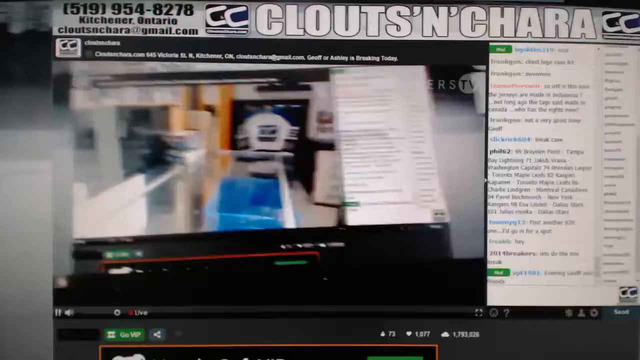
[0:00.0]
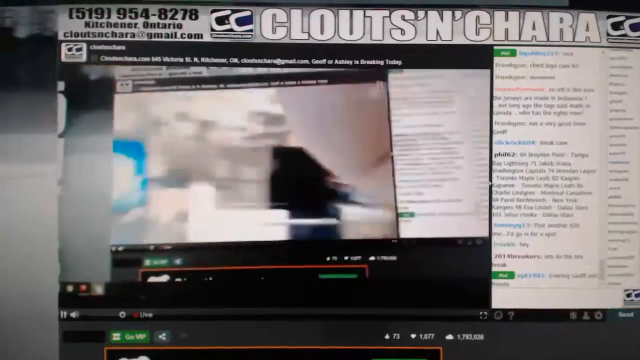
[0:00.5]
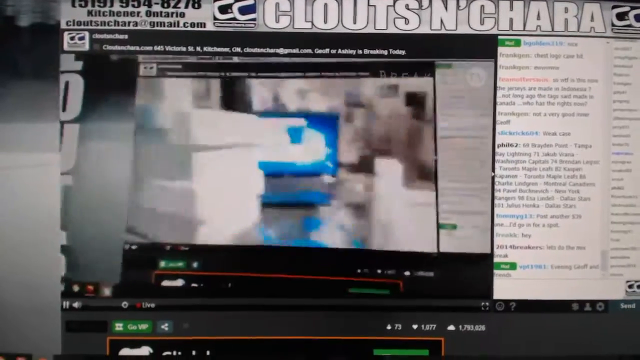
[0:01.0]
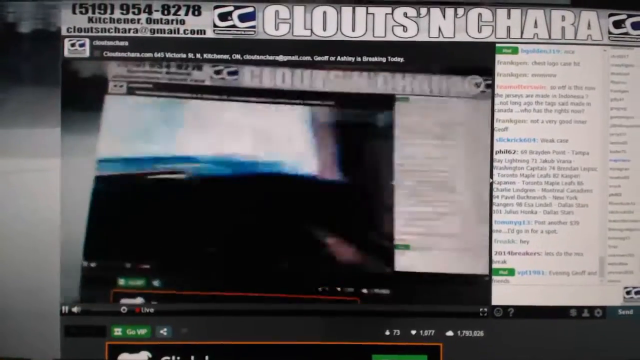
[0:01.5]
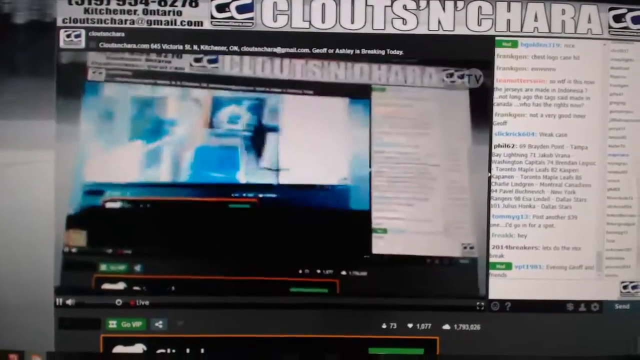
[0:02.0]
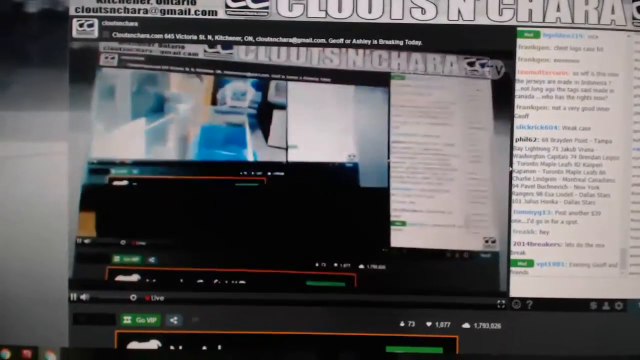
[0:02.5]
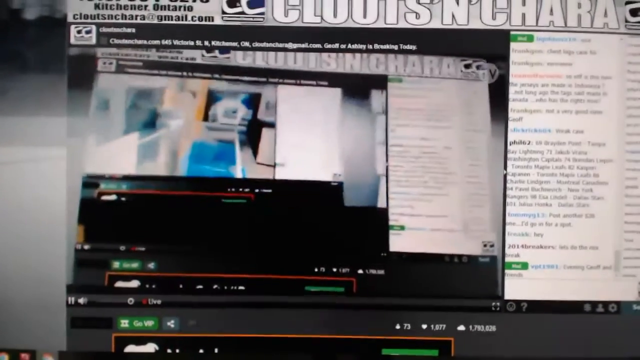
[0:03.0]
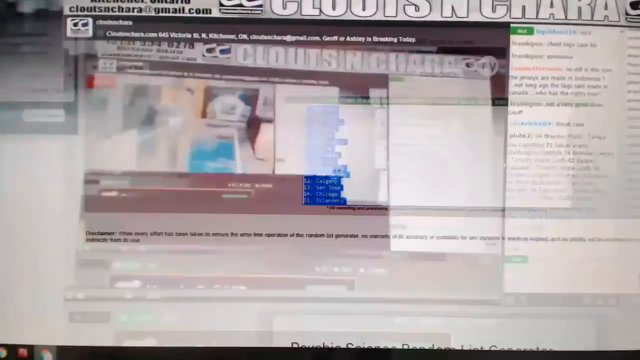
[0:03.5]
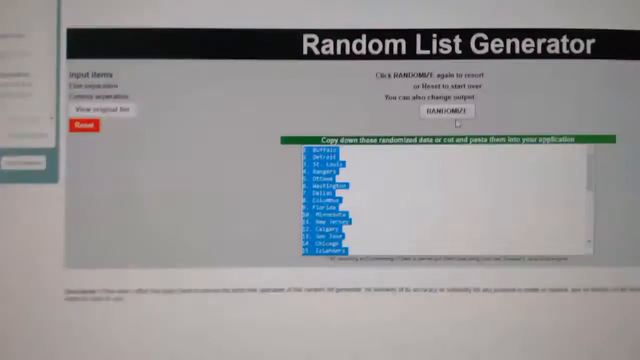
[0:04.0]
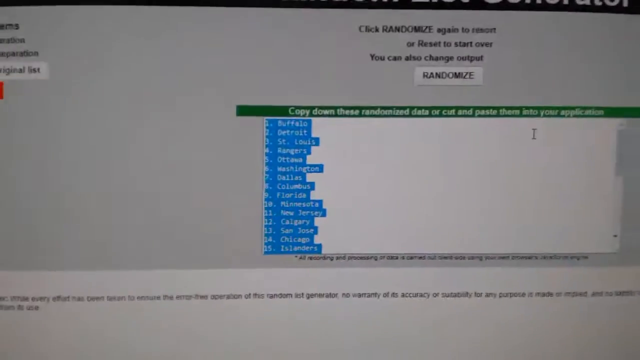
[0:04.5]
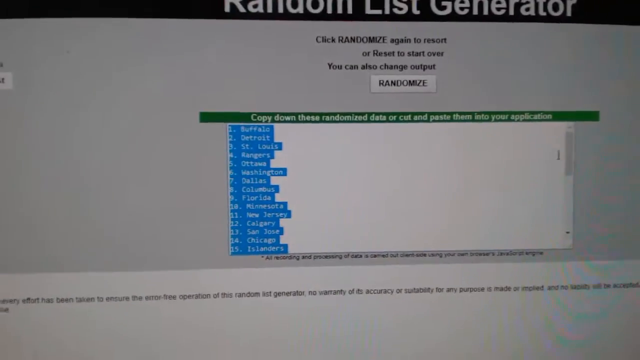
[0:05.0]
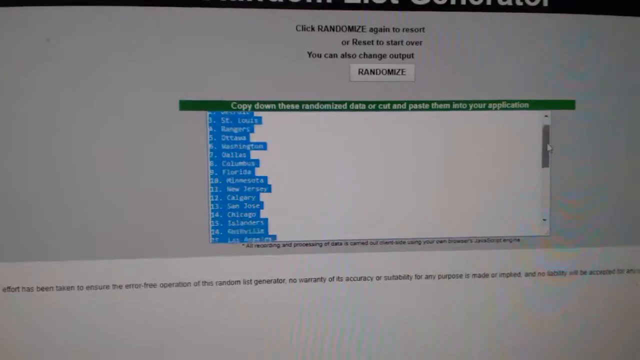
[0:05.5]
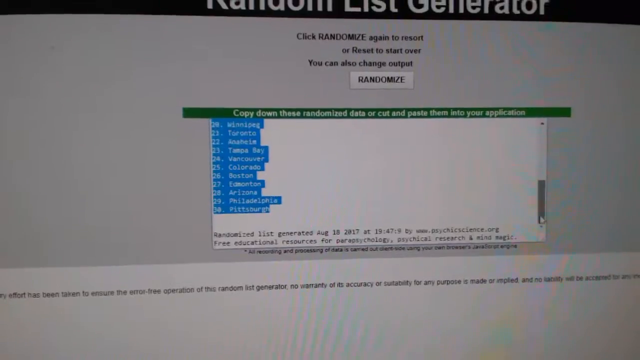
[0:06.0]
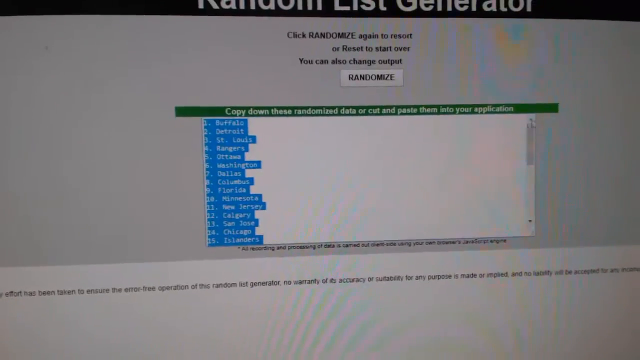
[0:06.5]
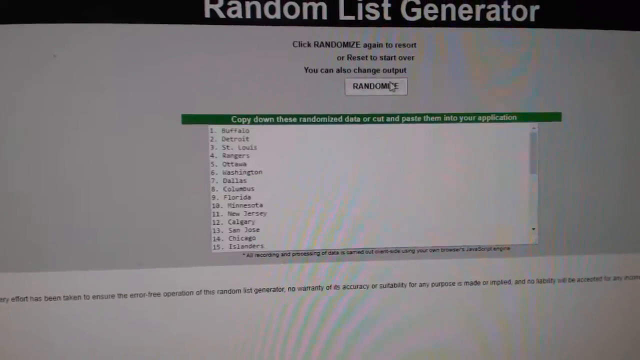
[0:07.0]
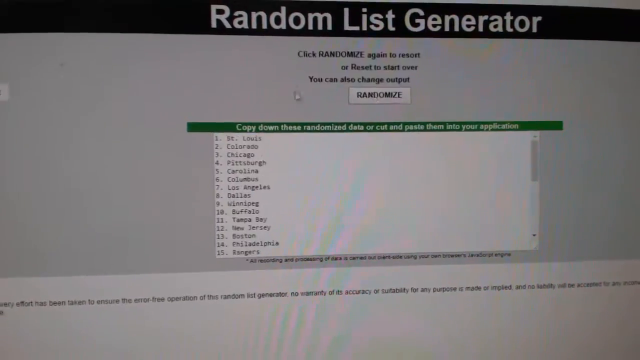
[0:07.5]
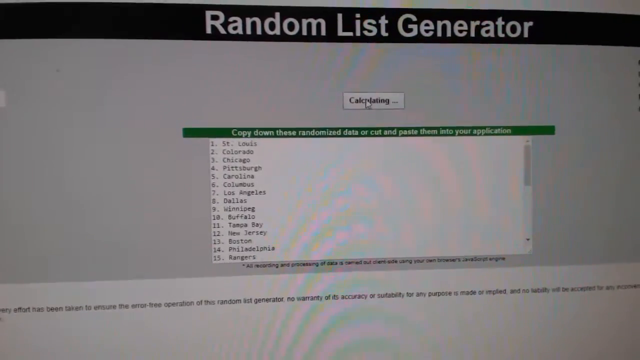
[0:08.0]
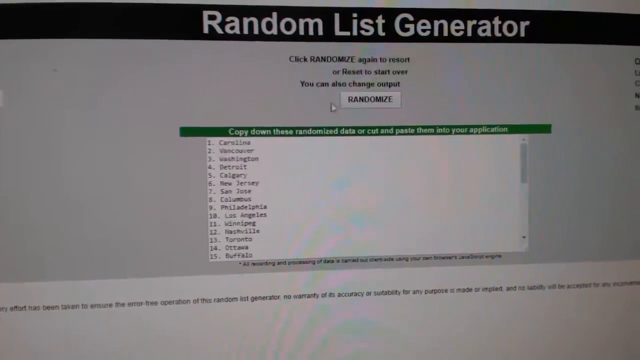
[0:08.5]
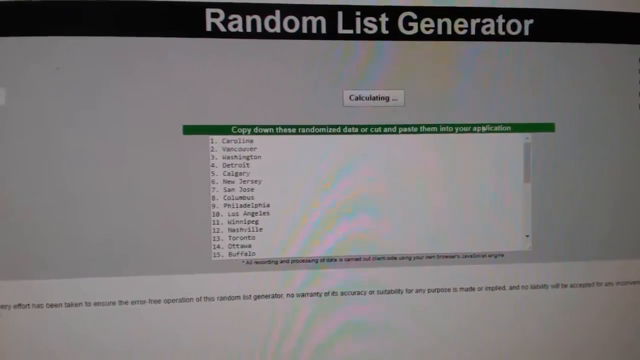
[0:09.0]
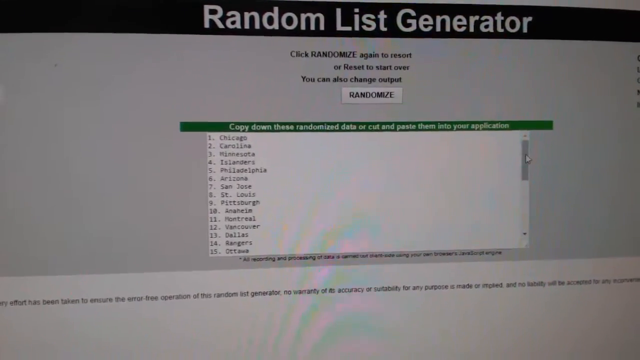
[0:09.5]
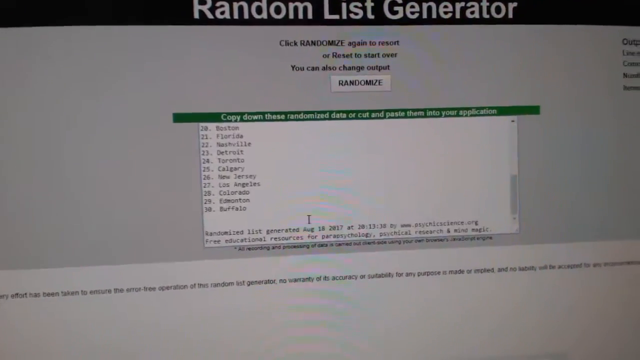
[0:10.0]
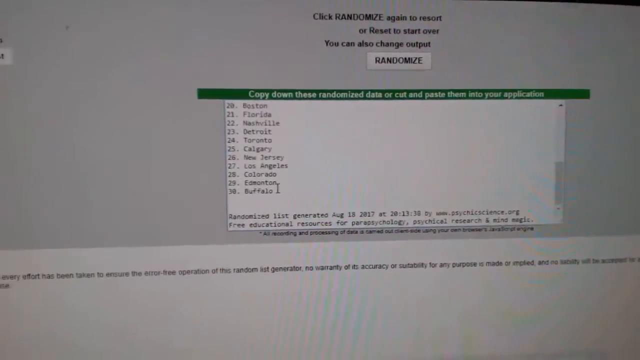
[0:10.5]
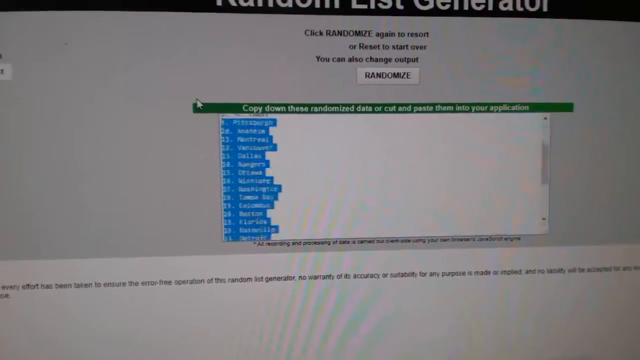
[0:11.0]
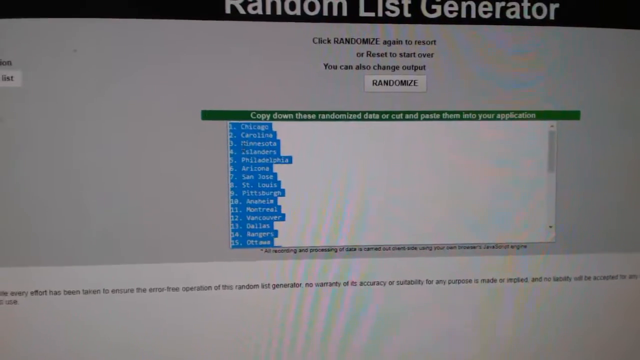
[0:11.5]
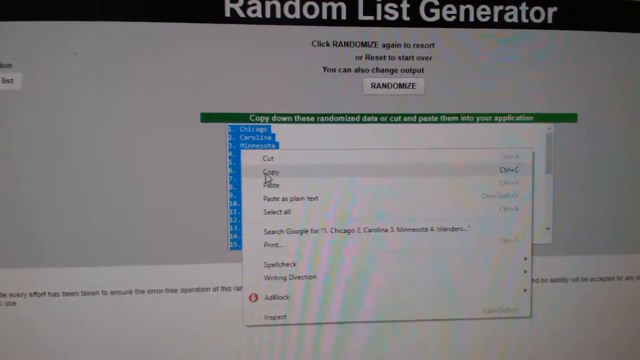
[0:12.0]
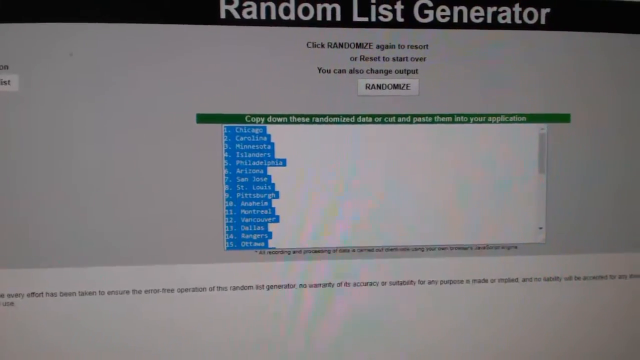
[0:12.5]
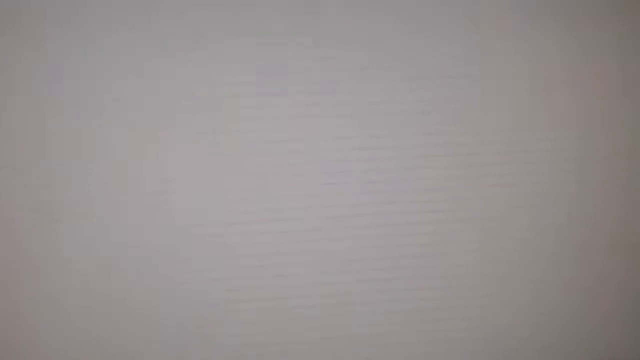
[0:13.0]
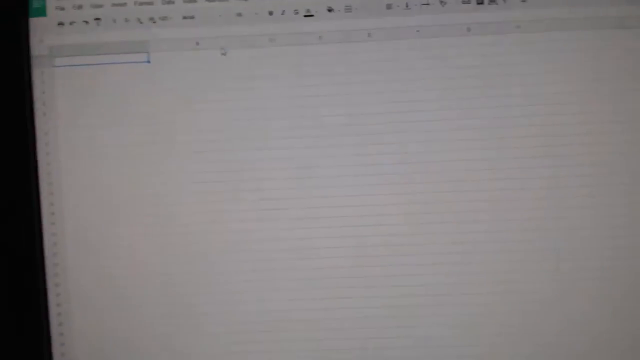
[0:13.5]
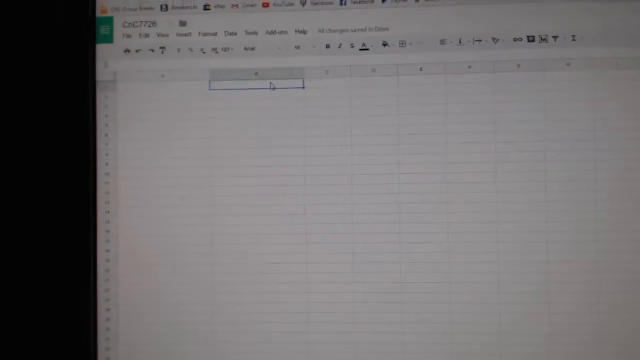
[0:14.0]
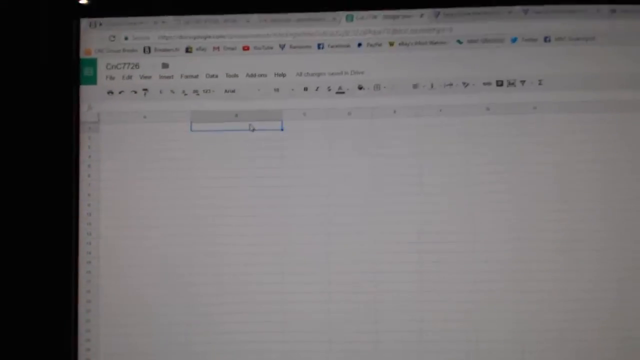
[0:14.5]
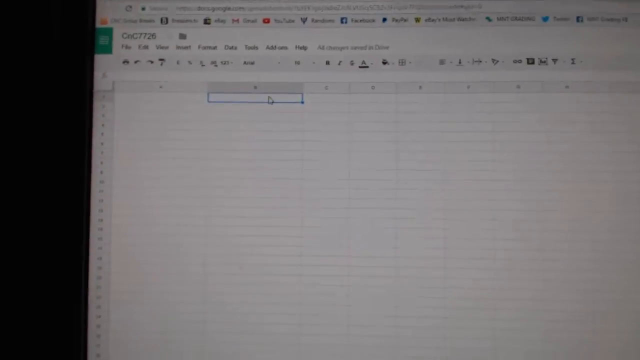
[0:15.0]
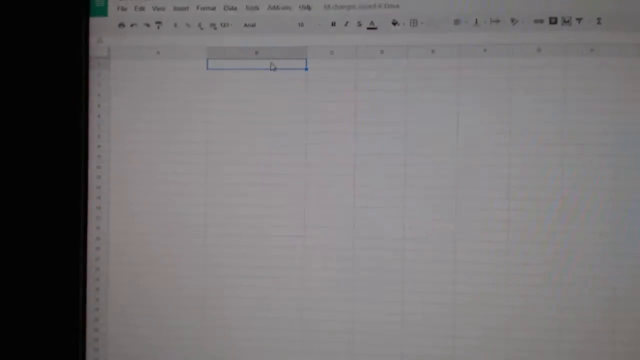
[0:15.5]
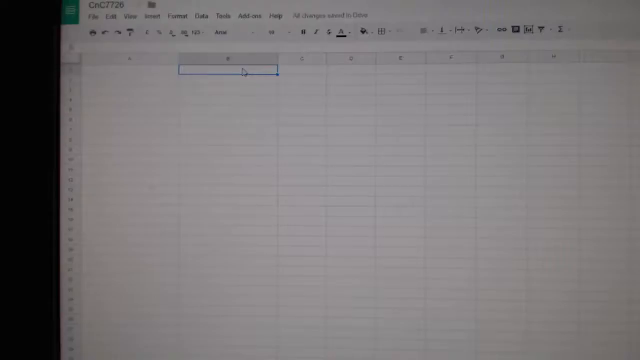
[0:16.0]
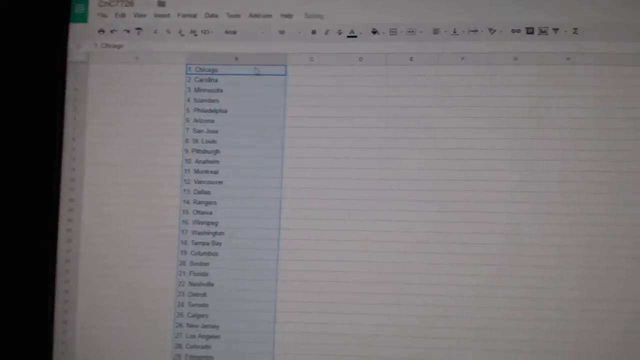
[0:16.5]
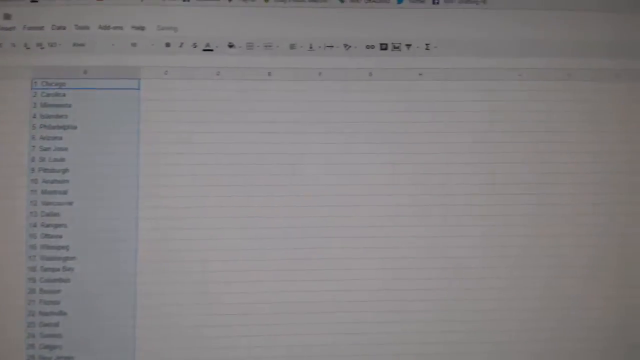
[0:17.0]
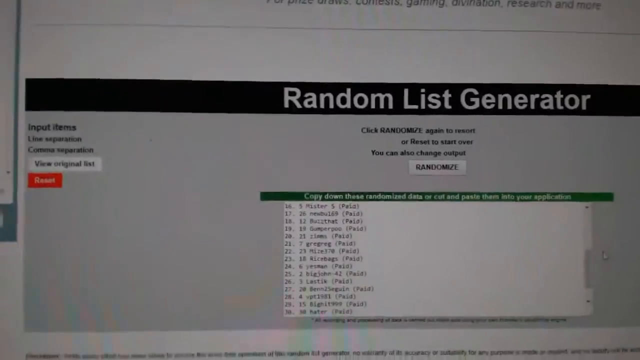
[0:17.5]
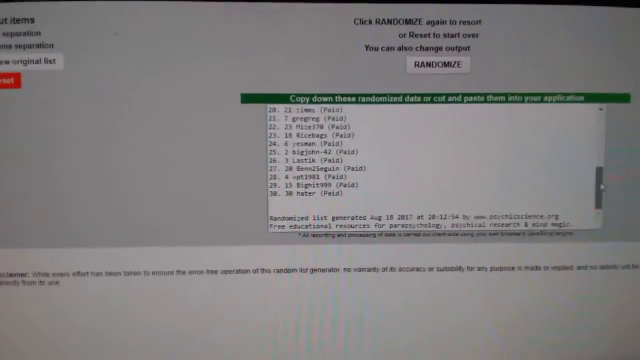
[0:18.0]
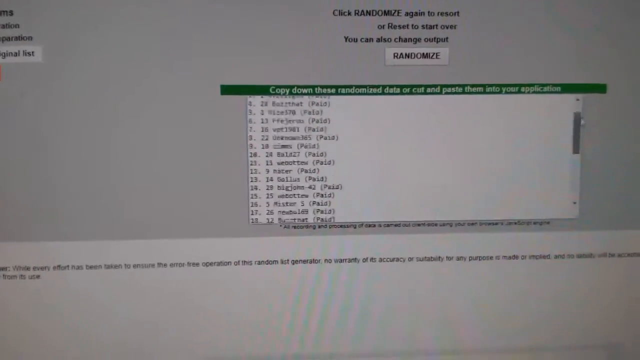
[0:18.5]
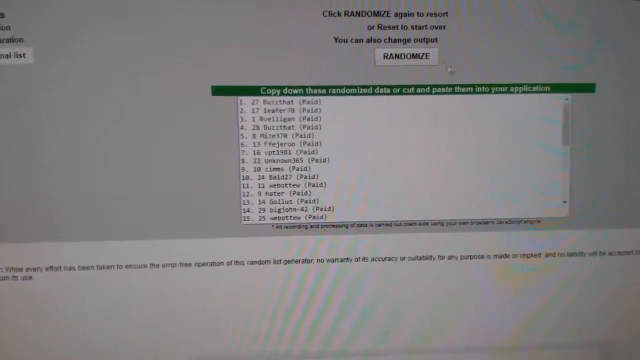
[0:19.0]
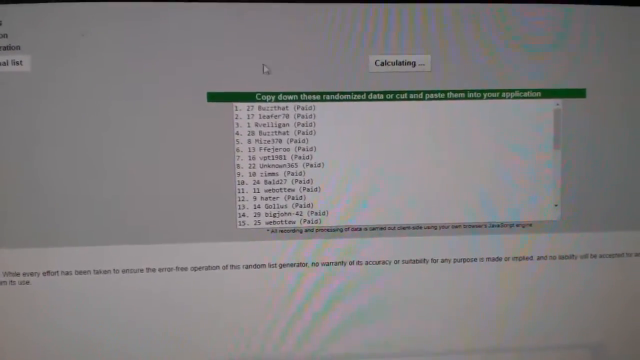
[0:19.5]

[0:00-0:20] The video opens on what looks like a recording of a YouTube video page called Clouts'n'Chara, showing a phone number, an email address, and the location Kitchener, Ontario. In the center there seems to be a video of a video playing, and to the right there appears to be a comment chat or live stream chat. The view then switches to a random list generator. The recording is made with a handheld camera that shakes as the person films. They highlight all of the items in the random list generator and press the randomize button a number of times. They go to the bottom of the list of randomized items and copy the list, then go to a spreadsheet file and click on the second column, column B. They paste all of the items into that column, then return to the random list generator and press randomize a number more times.